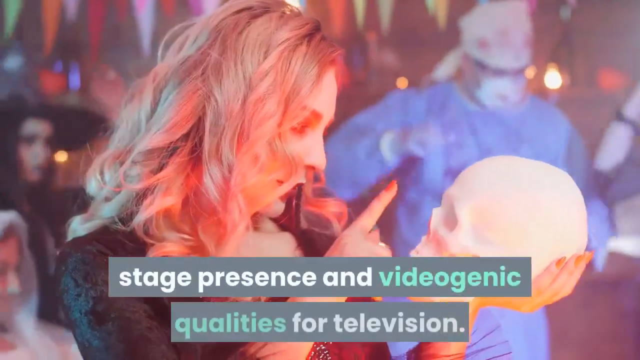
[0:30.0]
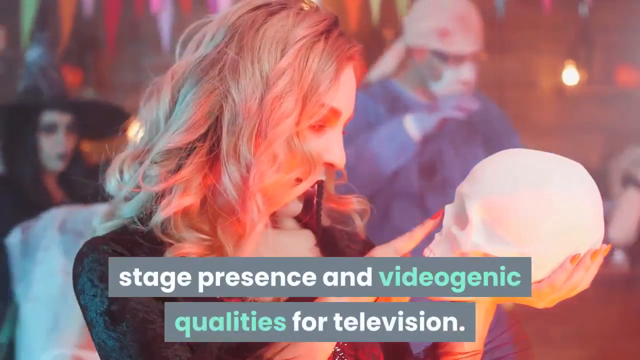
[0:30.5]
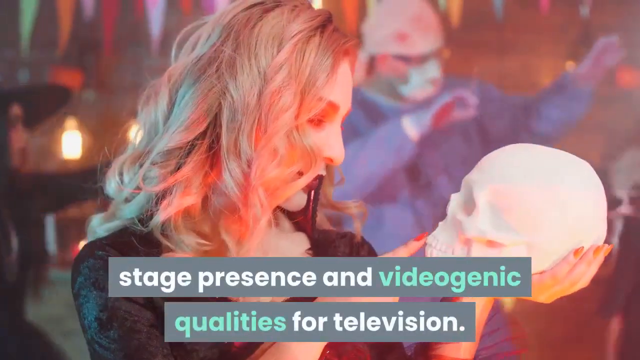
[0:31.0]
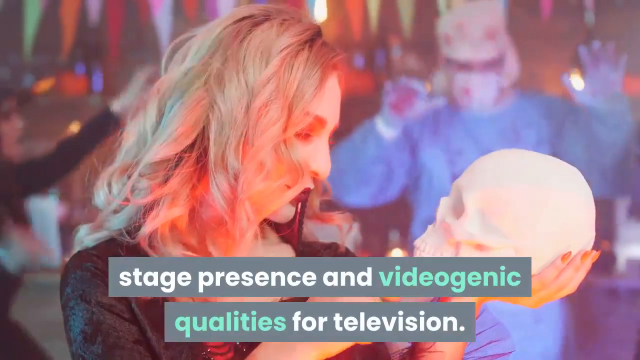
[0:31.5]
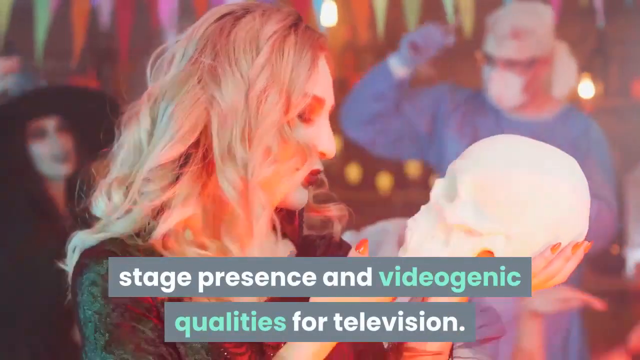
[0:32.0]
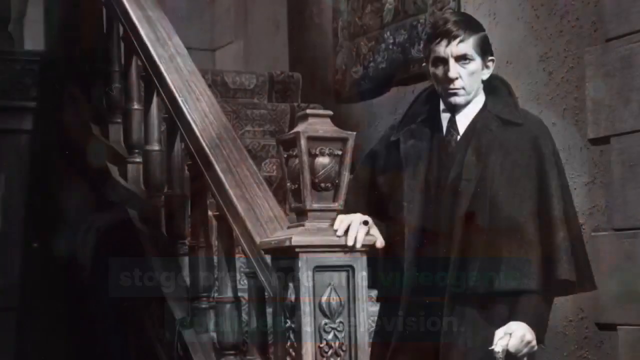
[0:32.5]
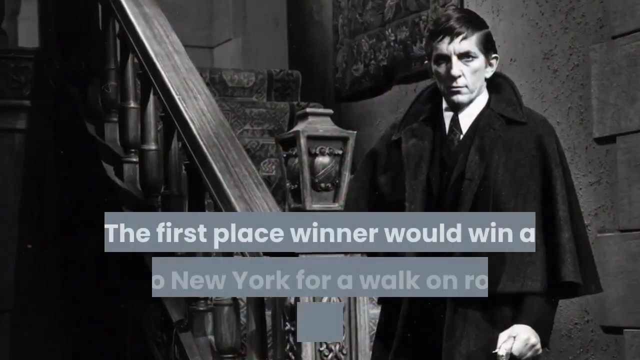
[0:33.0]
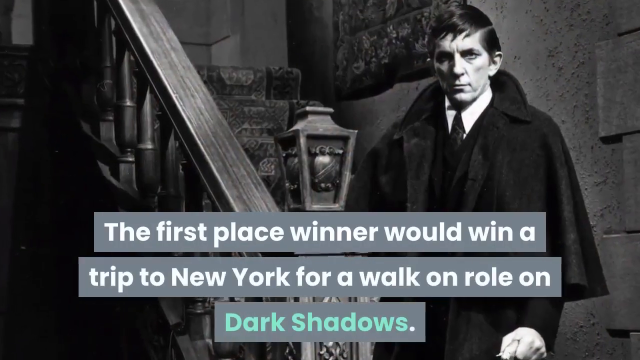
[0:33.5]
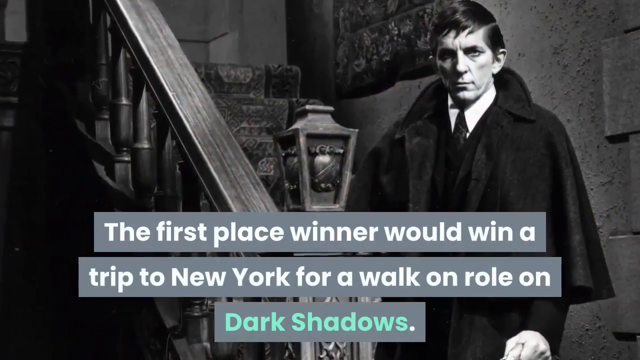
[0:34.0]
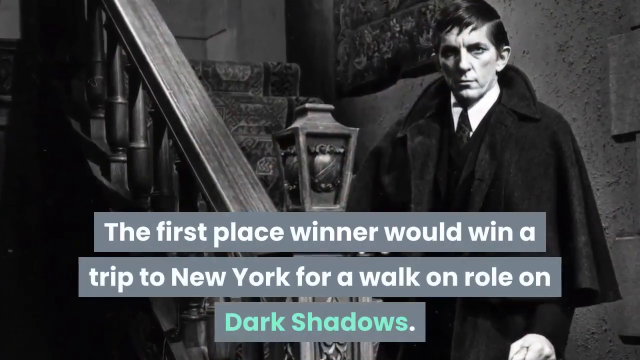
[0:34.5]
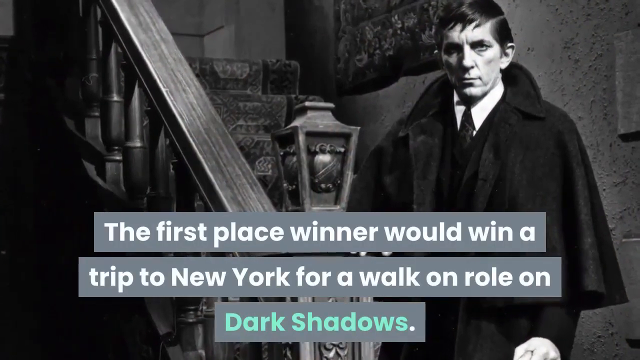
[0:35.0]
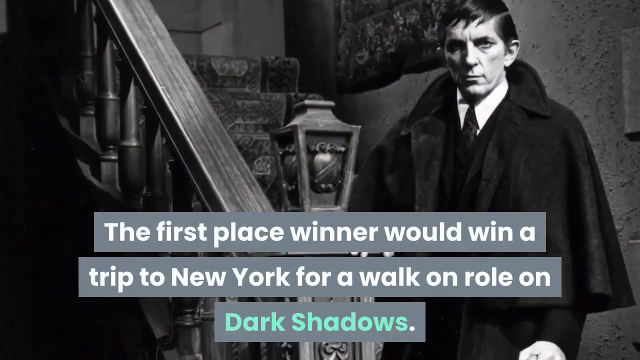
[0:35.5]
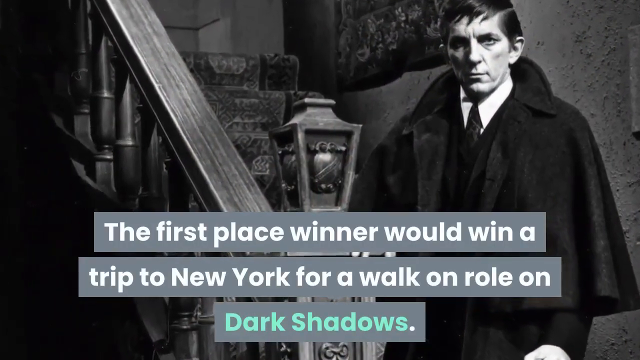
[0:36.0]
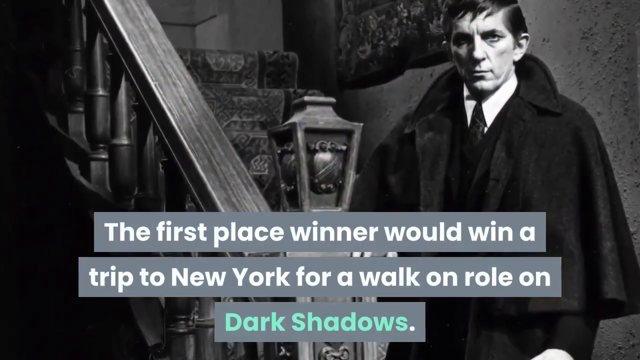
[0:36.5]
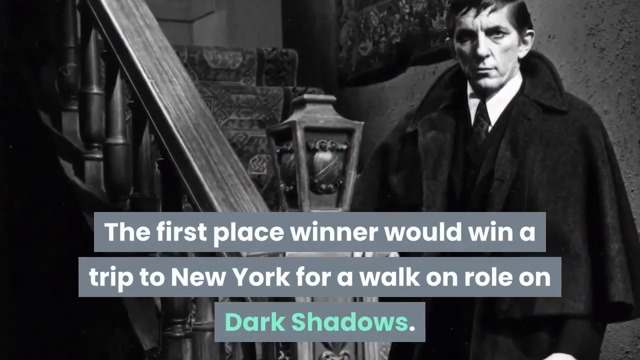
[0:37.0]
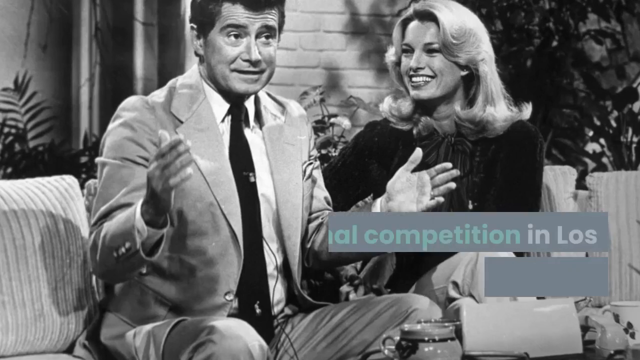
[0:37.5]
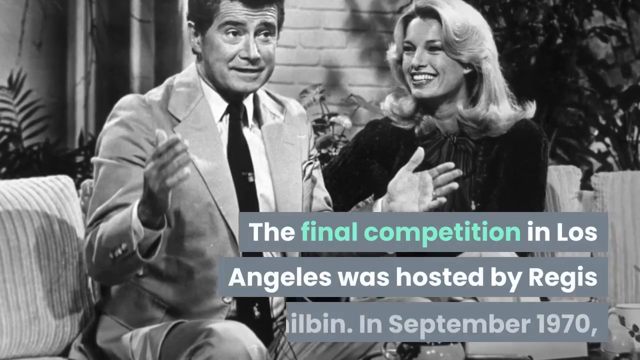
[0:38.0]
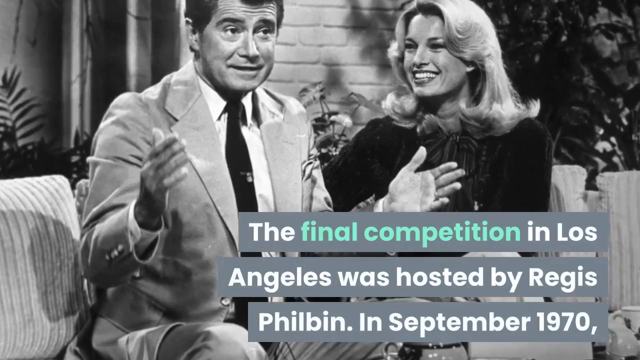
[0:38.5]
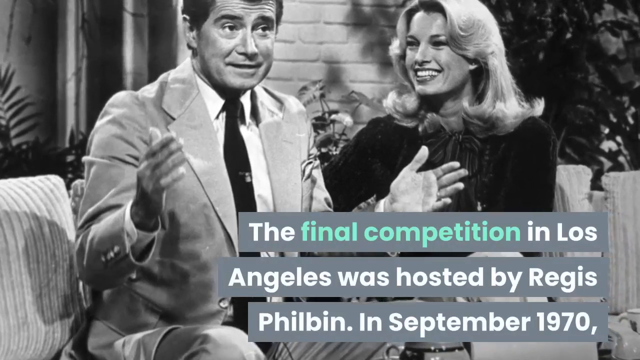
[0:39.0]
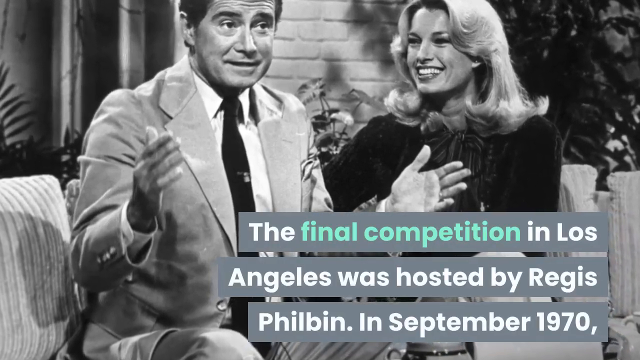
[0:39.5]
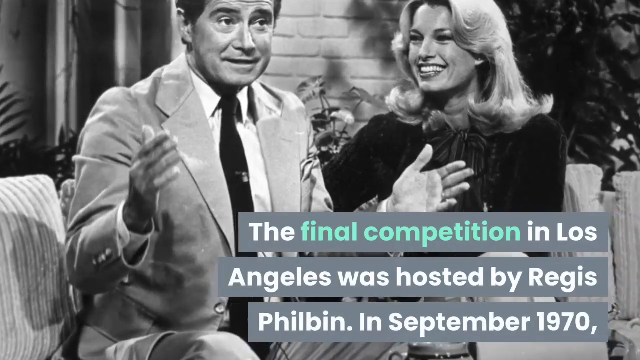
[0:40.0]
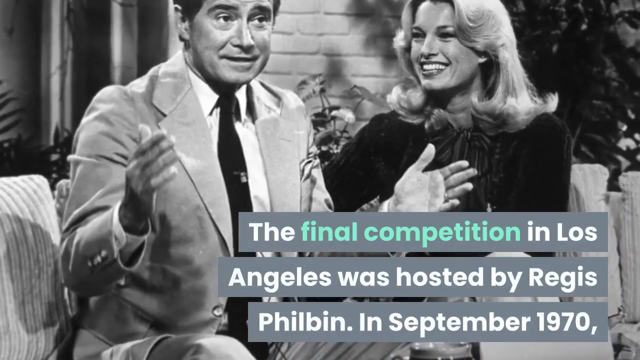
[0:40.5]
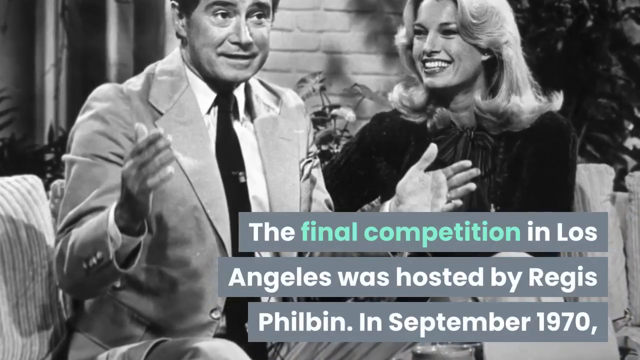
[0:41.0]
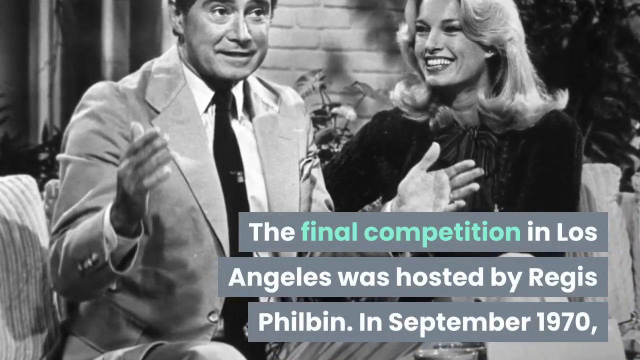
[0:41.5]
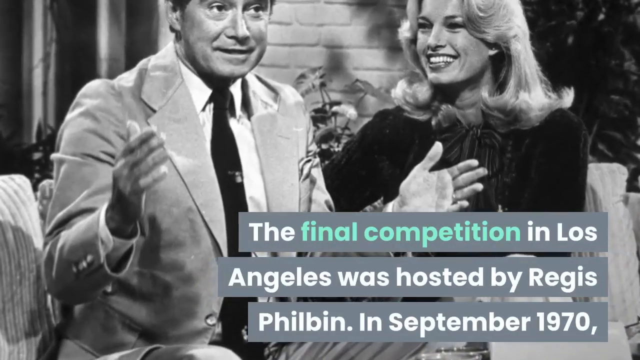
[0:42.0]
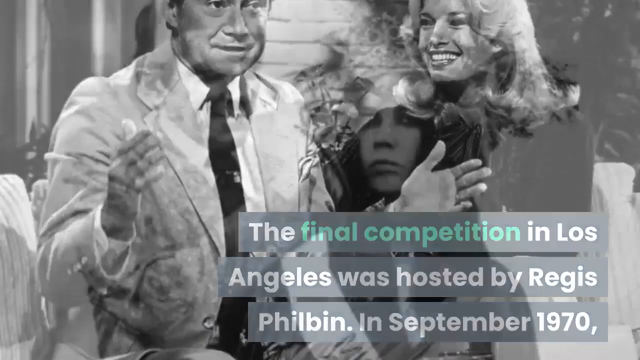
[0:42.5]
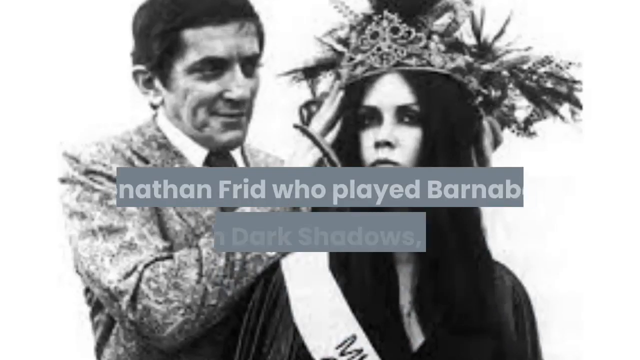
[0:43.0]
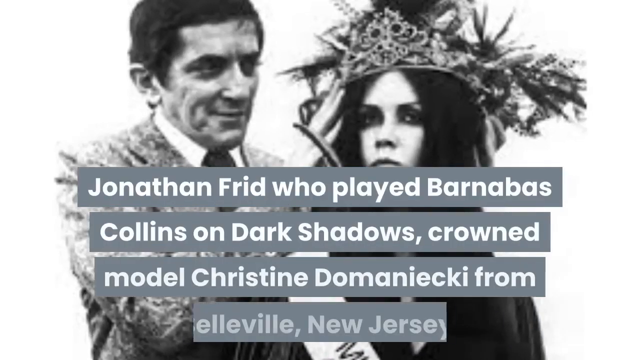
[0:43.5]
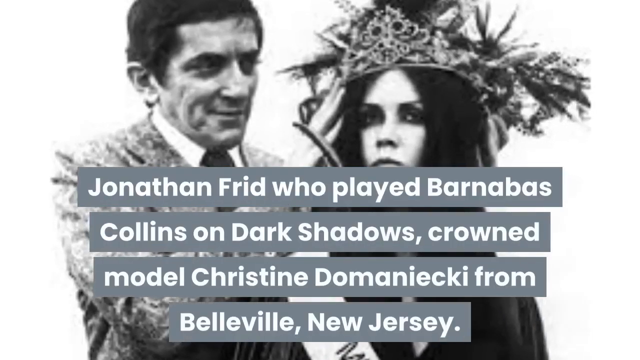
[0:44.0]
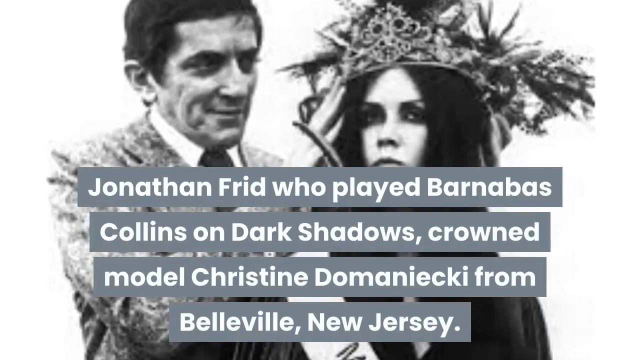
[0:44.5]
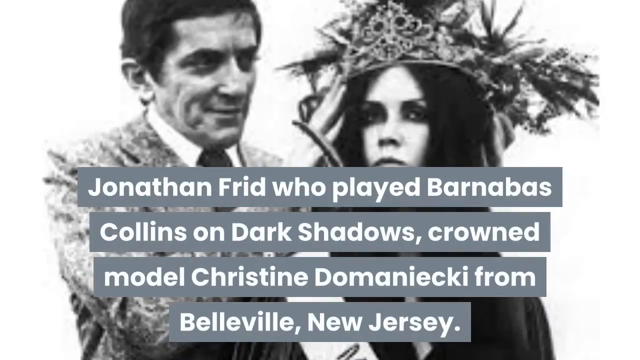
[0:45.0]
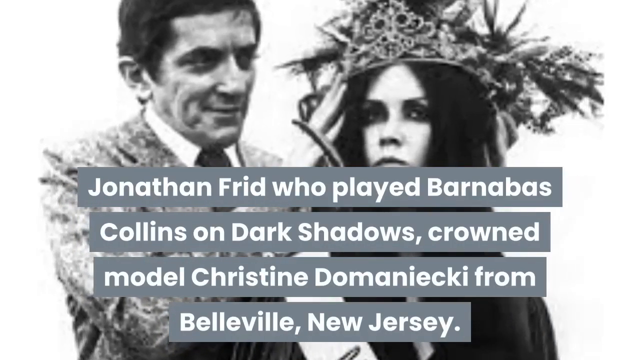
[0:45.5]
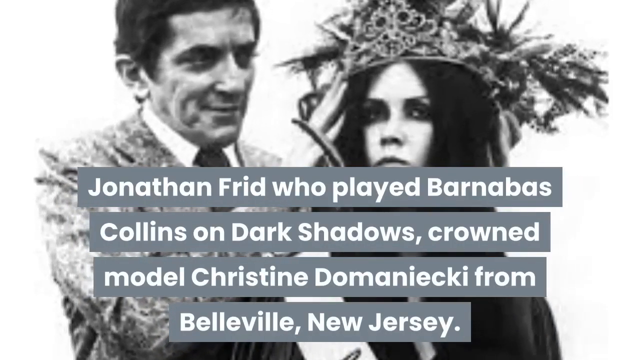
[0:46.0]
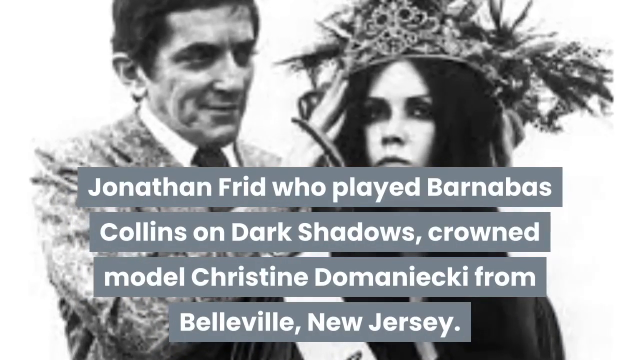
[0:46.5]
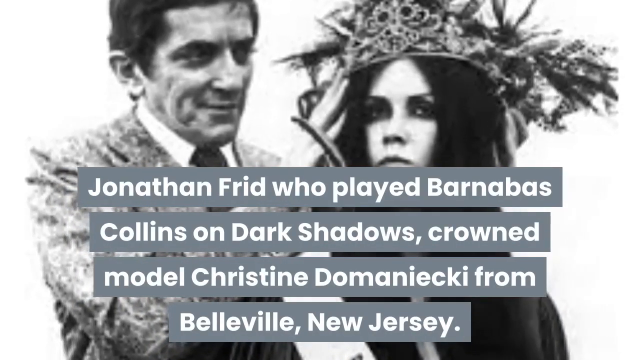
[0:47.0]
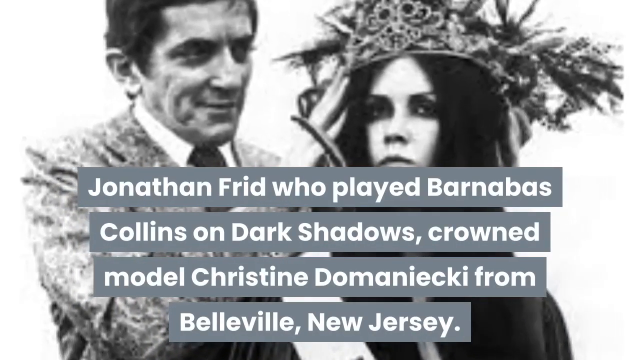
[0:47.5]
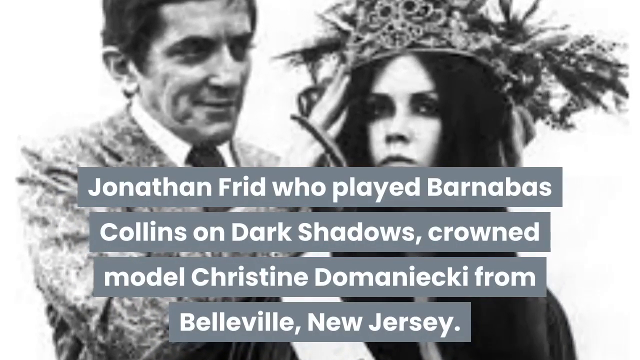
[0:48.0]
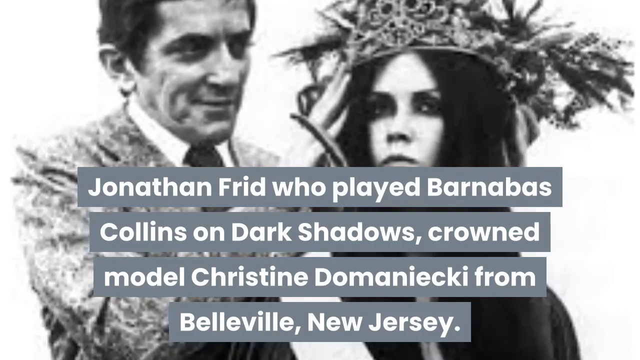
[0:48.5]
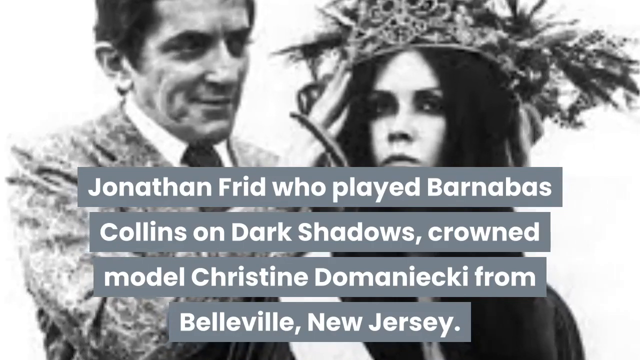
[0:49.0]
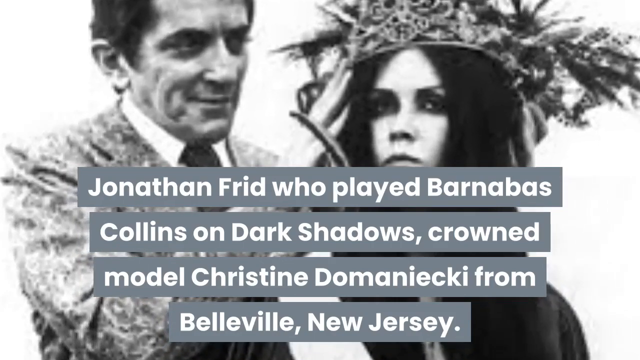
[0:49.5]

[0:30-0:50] A woman holds a skull on stage while performing. Text states that the first place winner would win a trip to New York for a walk-on, and that the final competition in Los Angeles was hosted by Regis Philbin in September 1970. The model who is from New Jersey is shown.